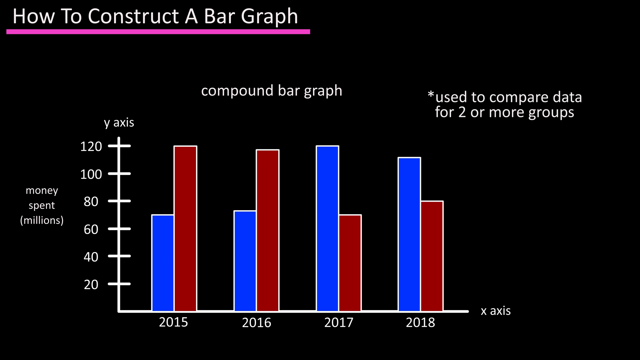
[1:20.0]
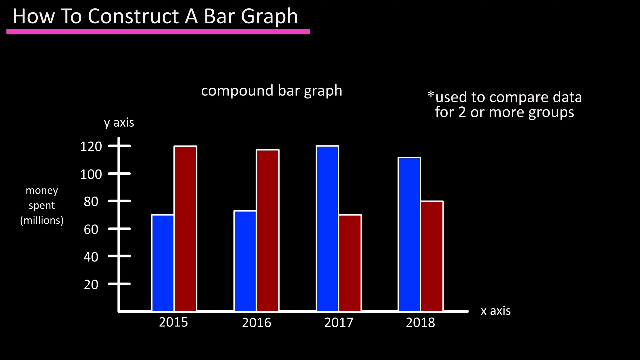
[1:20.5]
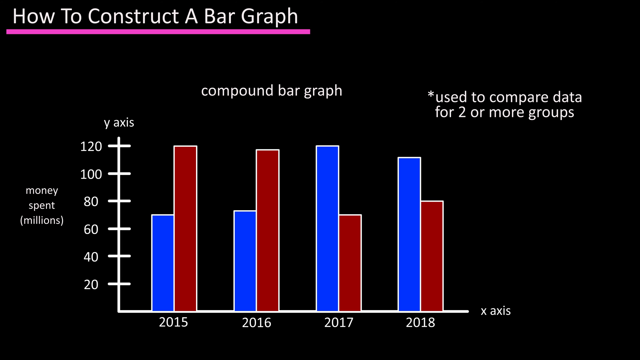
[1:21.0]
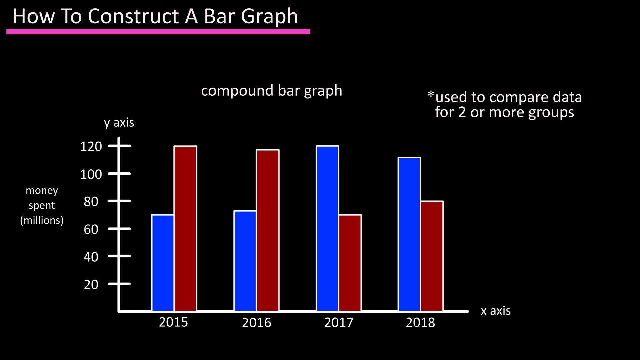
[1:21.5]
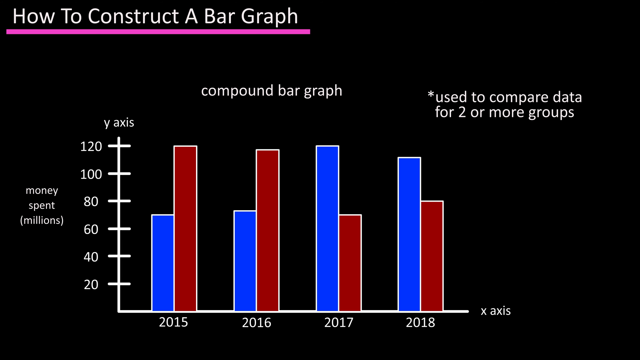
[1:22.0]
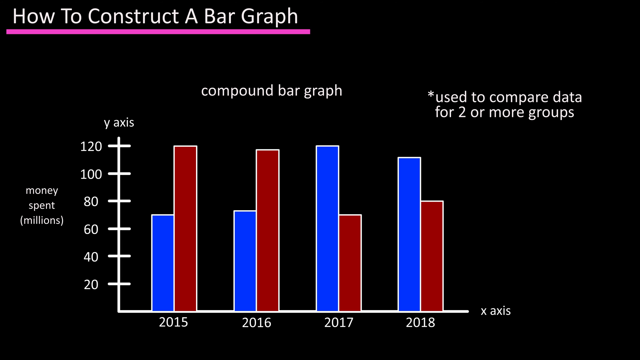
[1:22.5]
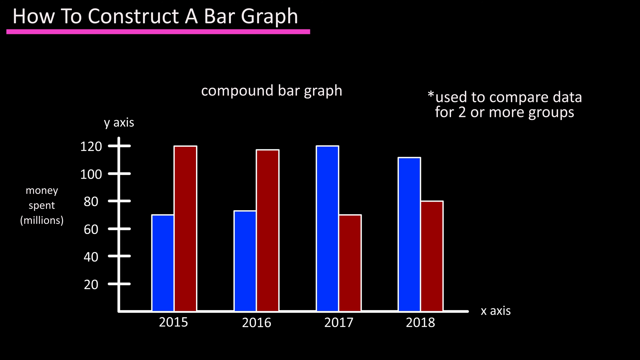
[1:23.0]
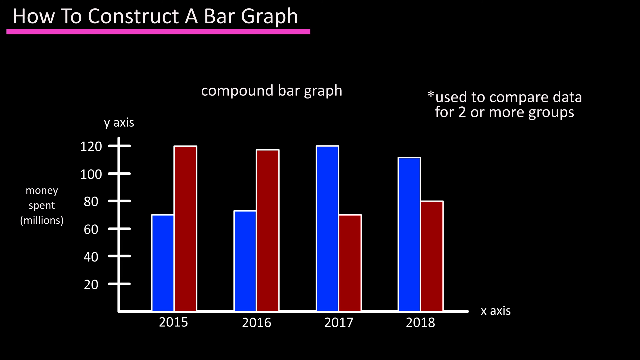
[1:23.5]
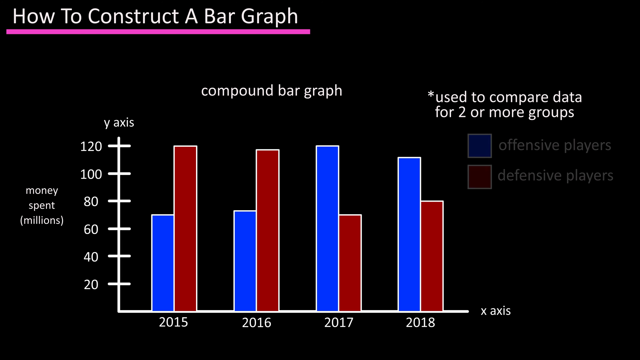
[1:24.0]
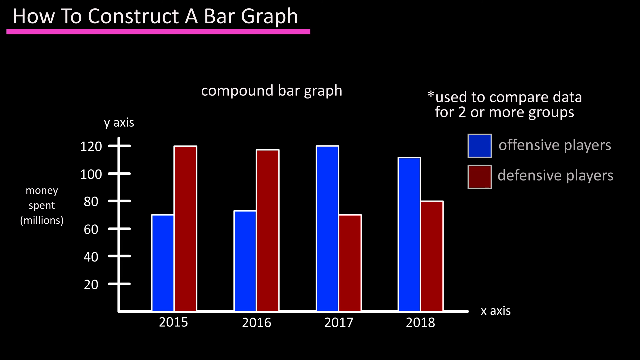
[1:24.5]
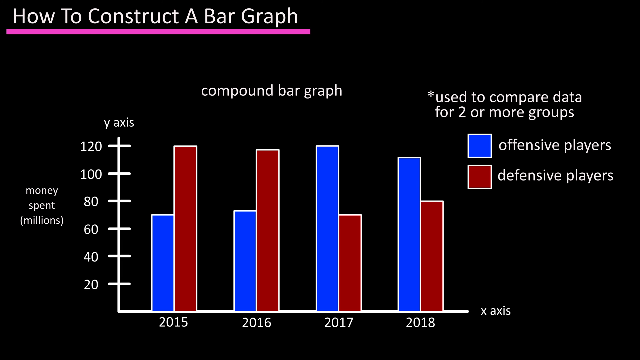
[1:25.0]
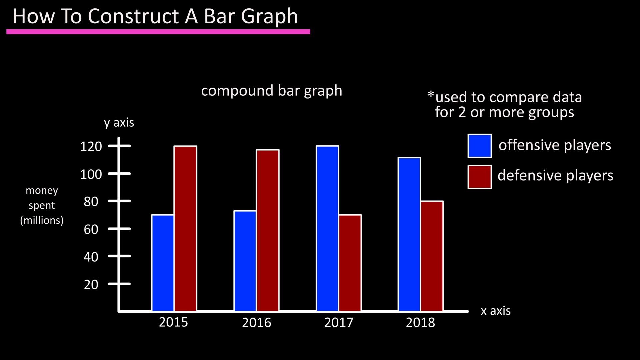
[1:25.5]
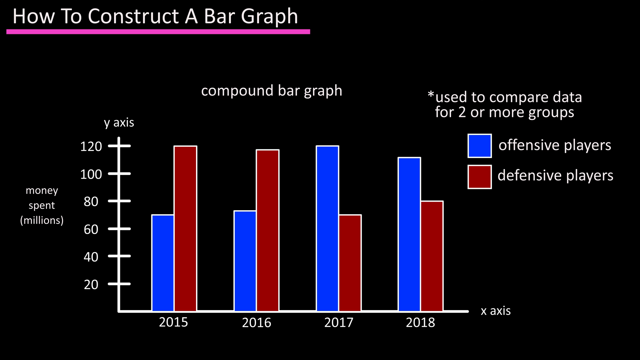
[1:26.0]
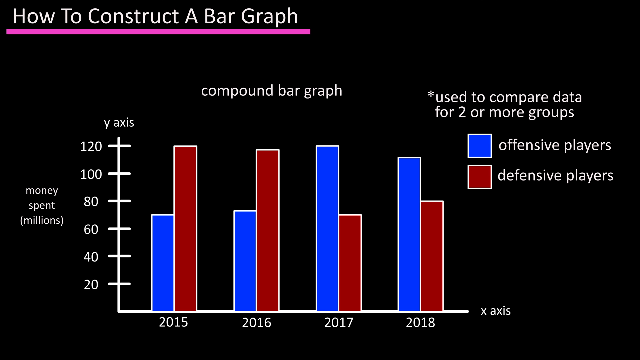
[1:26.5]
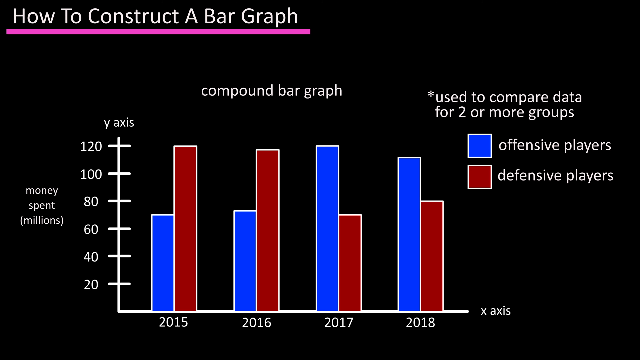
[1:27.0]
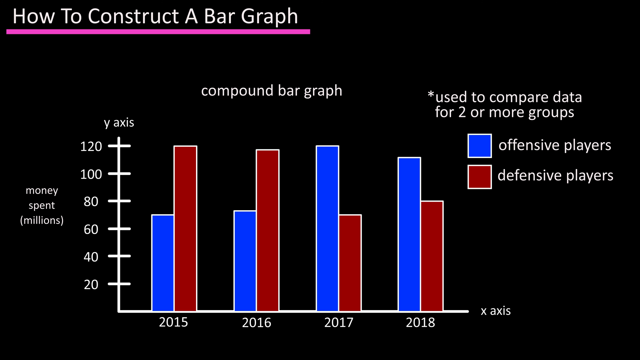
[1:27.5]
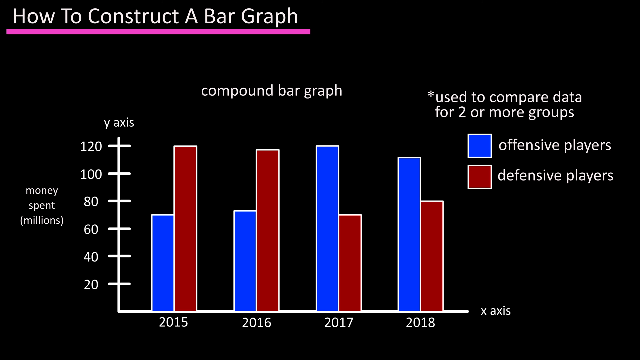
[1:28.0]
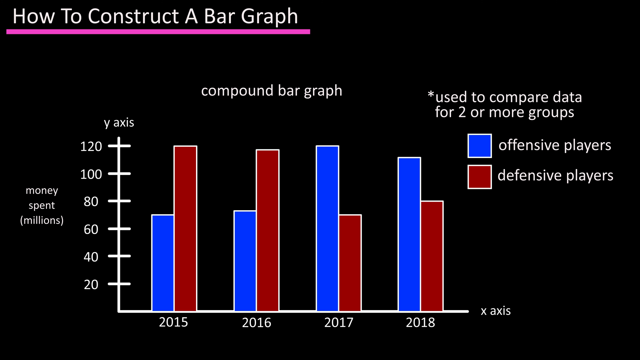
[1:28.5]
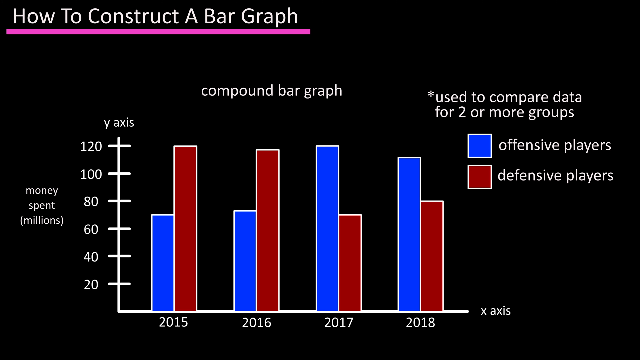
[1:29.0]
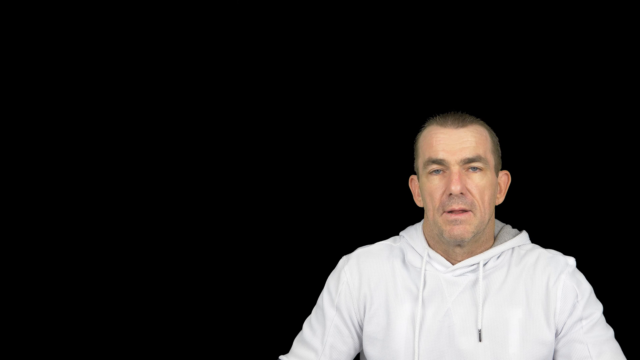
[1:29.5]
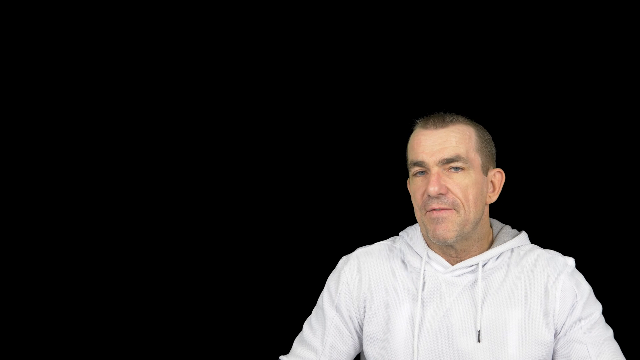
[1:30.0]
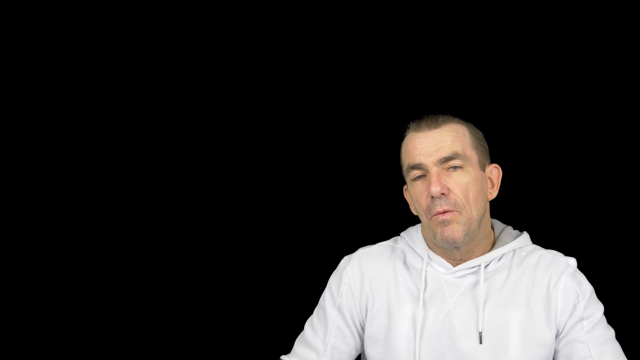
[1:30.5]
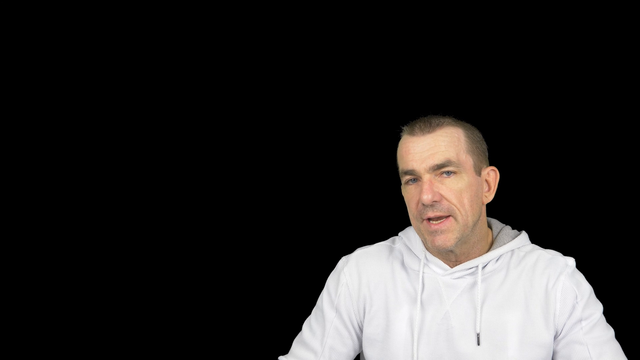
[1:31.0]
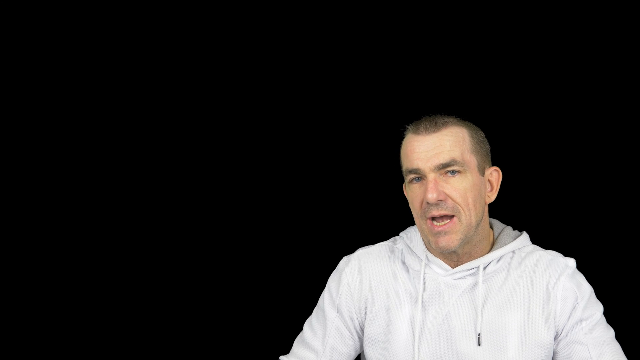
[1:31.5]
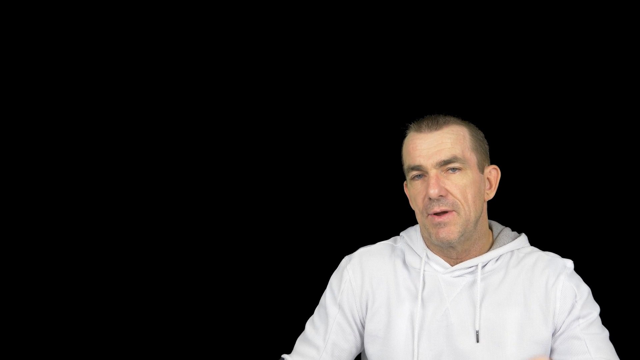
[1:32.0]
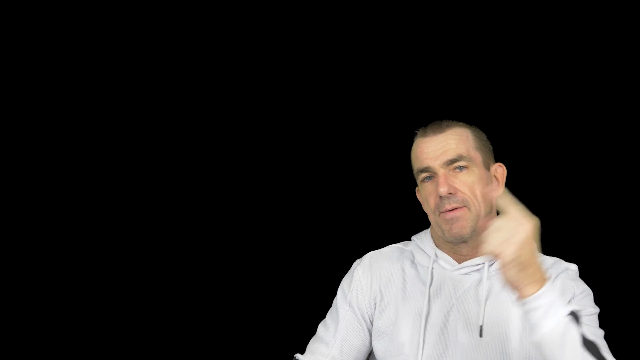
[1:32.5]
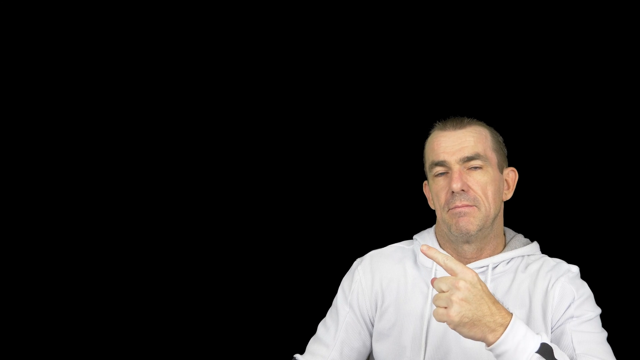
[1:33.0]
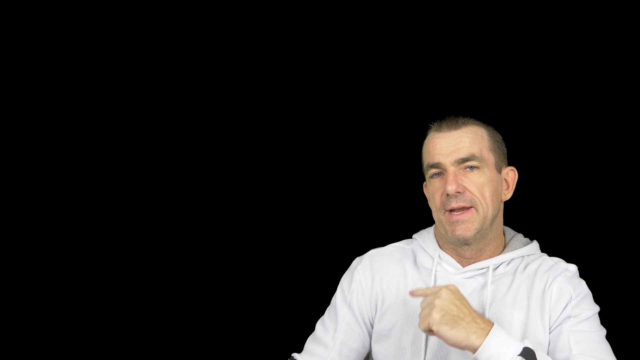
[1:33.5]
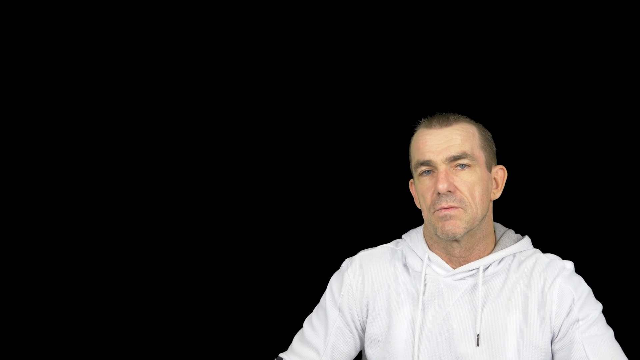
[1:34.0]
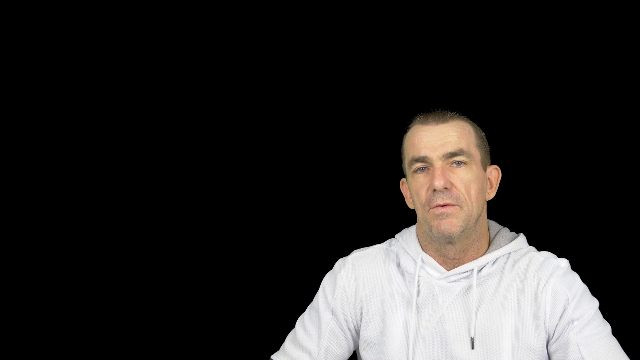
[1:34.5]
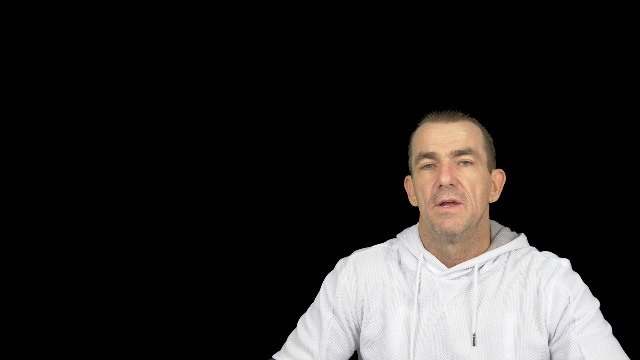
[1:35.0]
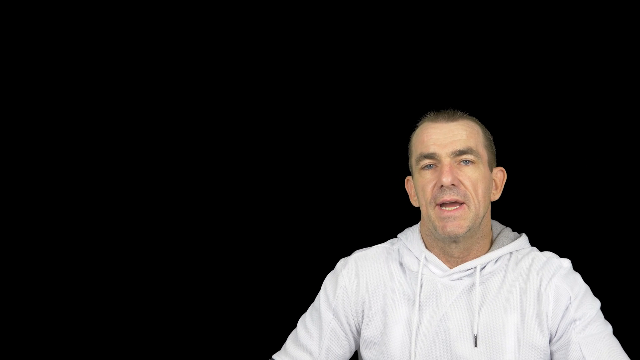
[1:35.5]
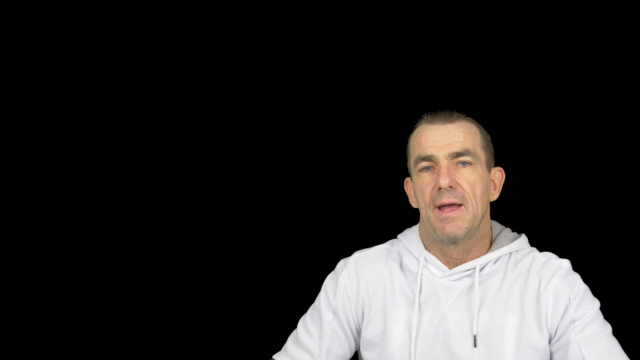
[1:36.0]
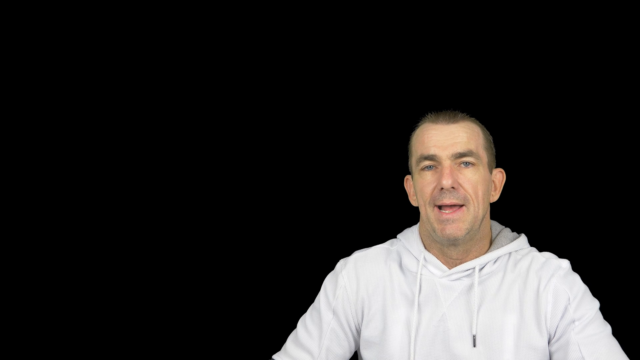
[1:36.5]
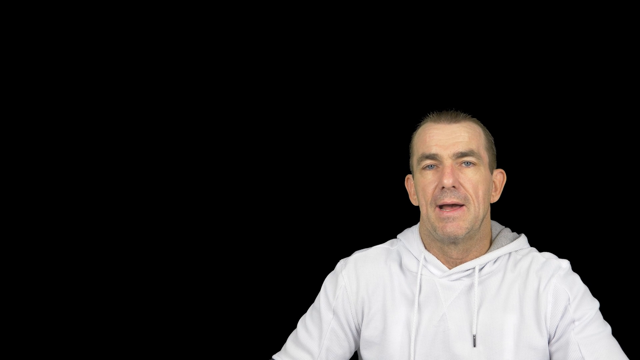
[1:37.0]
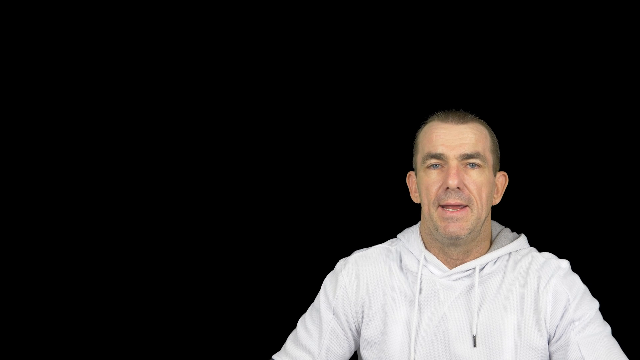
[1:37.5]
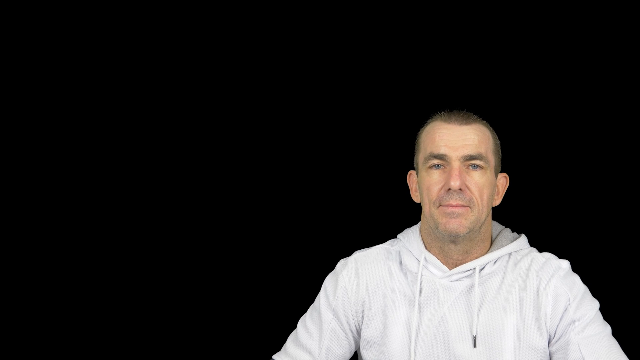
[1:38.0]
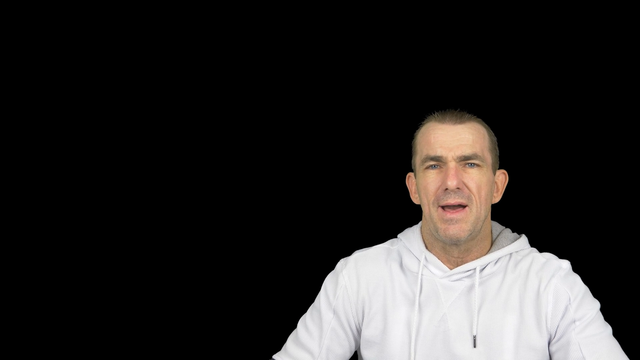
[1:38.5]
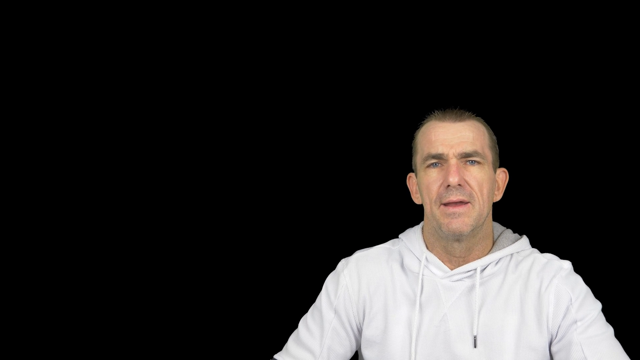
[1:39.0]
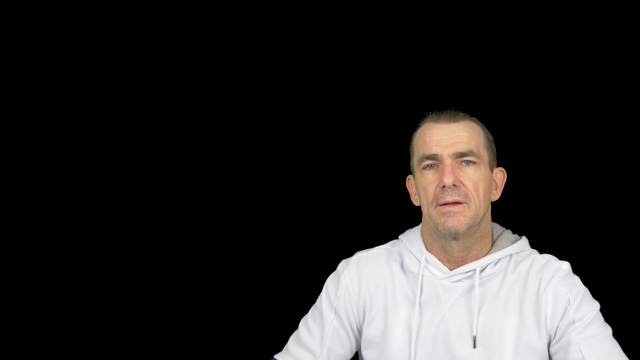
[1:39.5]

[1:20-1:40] The video again shows a bar graph being built up: just the skeleton of the bar graph, with the information to populate it and the total bar graph with its bars in the far right-hand corner. Compound bar graphs, which show two or more data groups, are then introduced, with an example of offensive players and defensive players instead of shoe sales. In the compound graph each category has a blue bar and a red bar, blue for offensive and red for defensive. The video moves through vertical bars, horizontal bars and compound bars, presenting information on more than one topic in many different types of graphs.